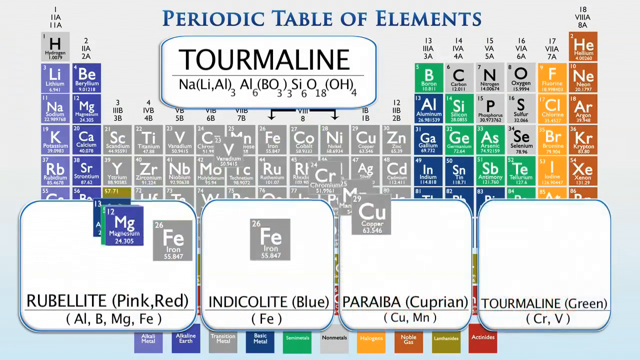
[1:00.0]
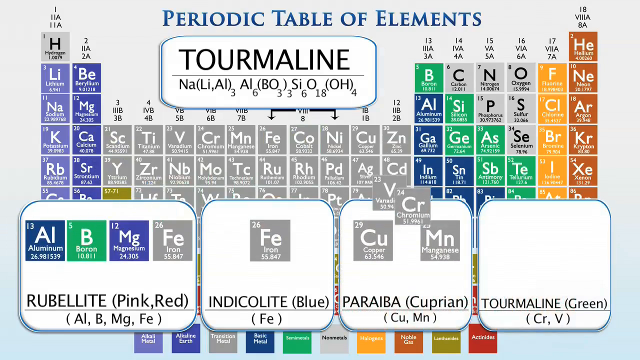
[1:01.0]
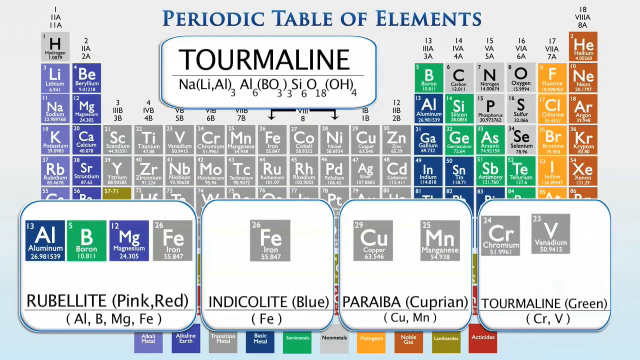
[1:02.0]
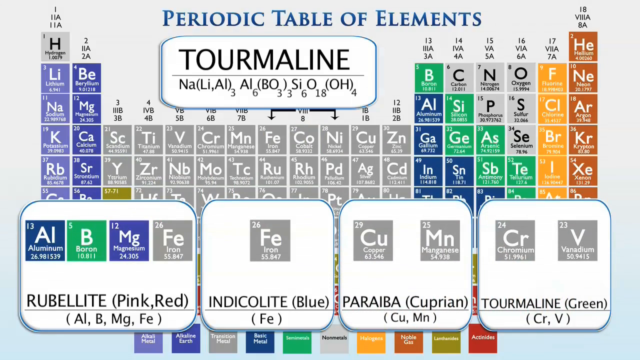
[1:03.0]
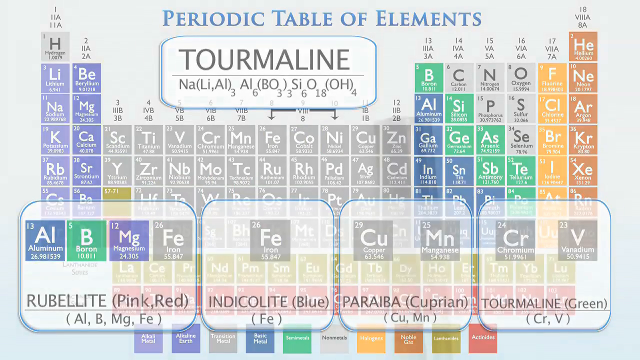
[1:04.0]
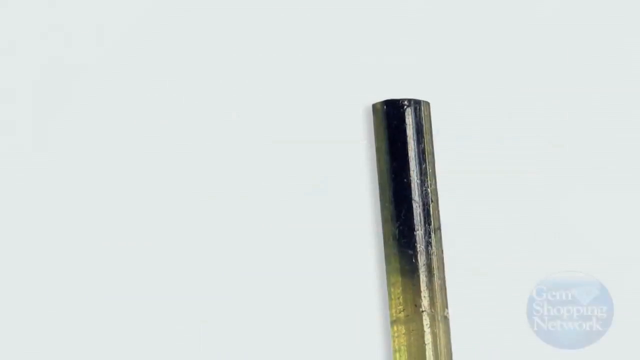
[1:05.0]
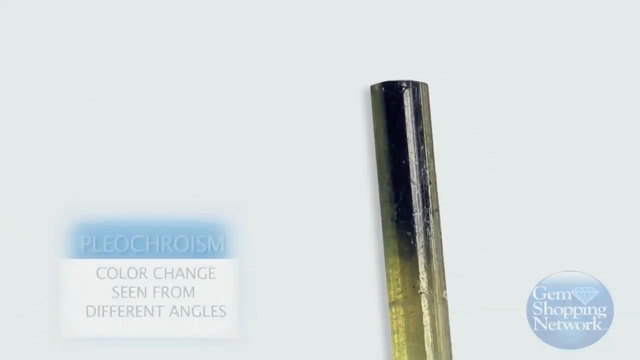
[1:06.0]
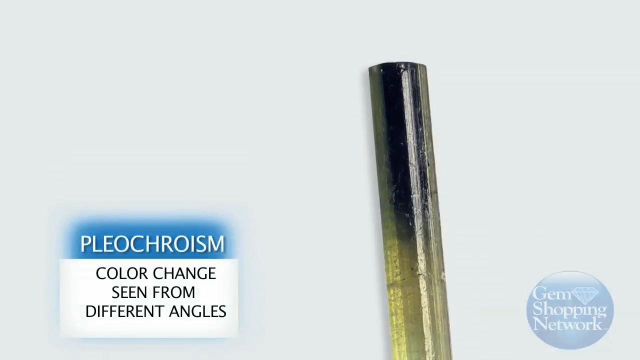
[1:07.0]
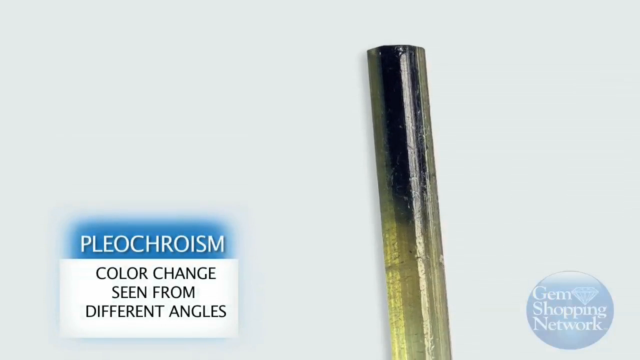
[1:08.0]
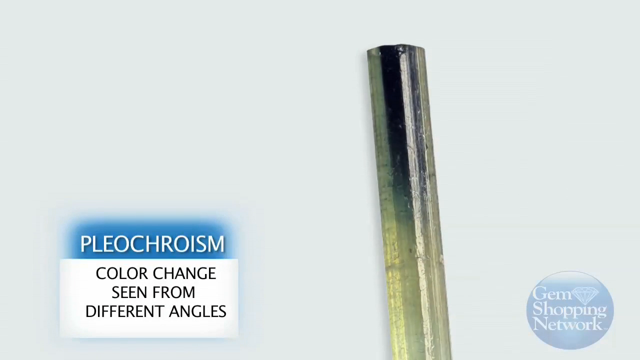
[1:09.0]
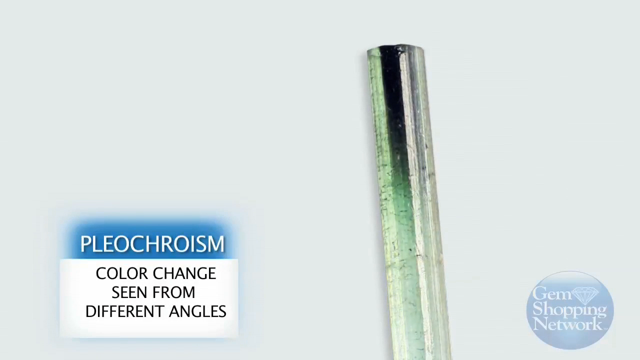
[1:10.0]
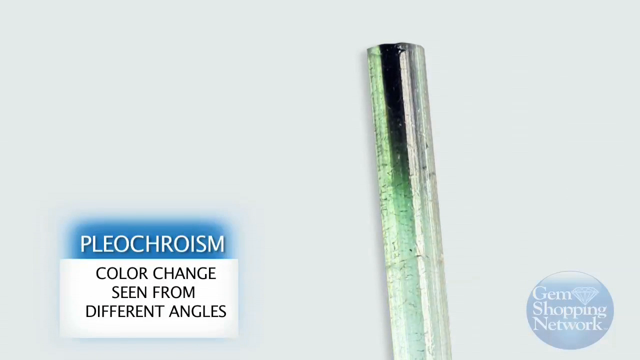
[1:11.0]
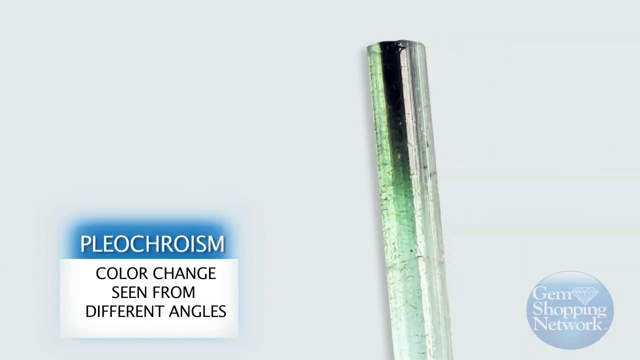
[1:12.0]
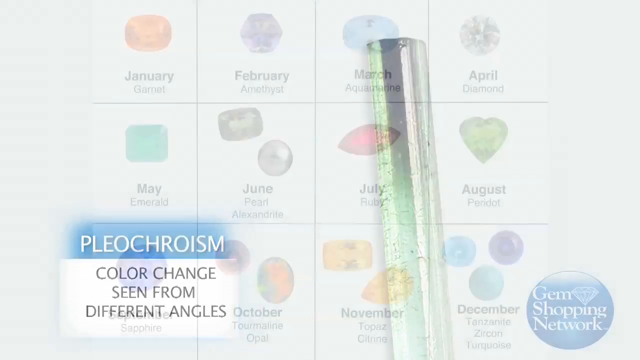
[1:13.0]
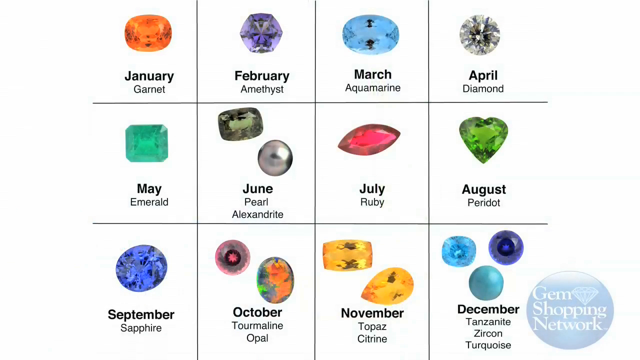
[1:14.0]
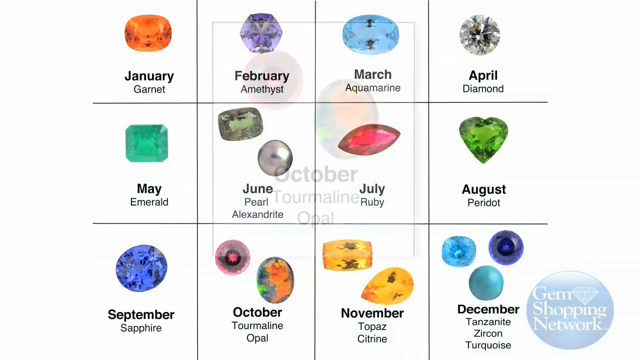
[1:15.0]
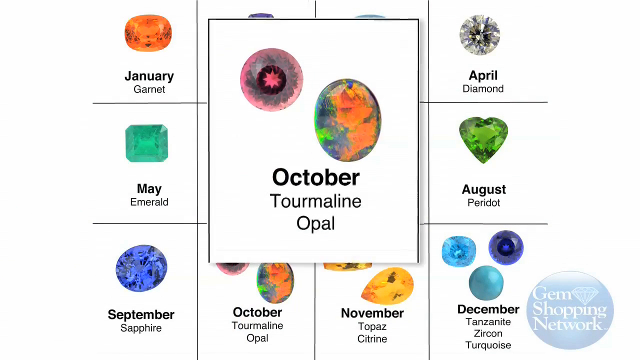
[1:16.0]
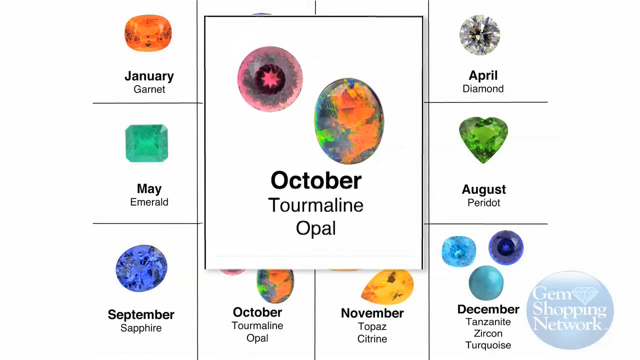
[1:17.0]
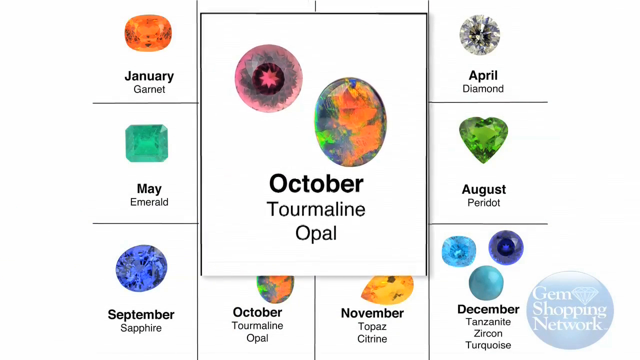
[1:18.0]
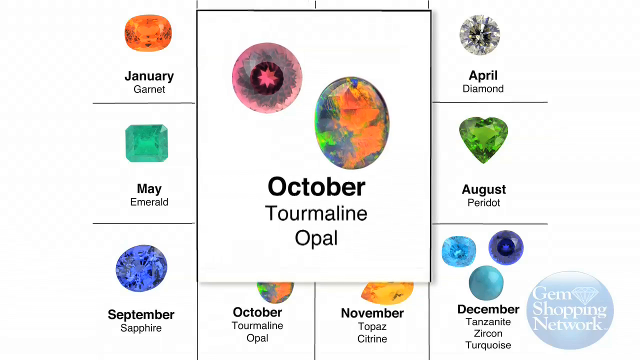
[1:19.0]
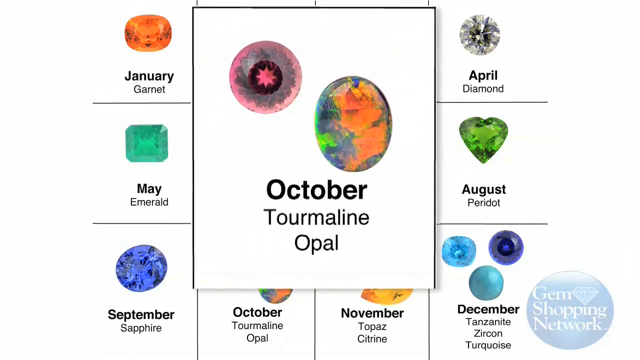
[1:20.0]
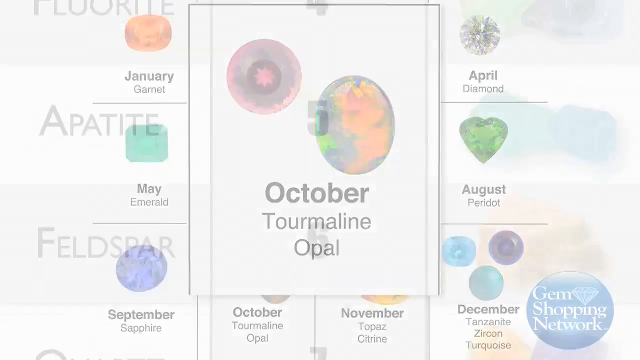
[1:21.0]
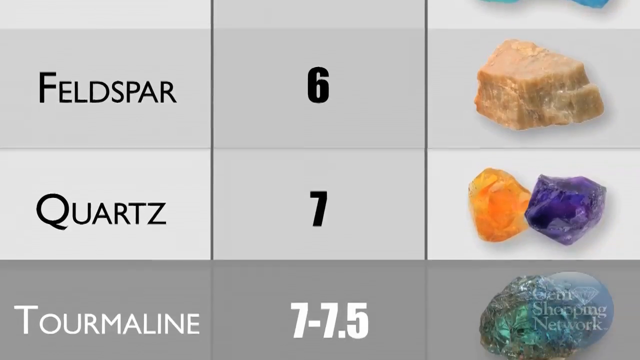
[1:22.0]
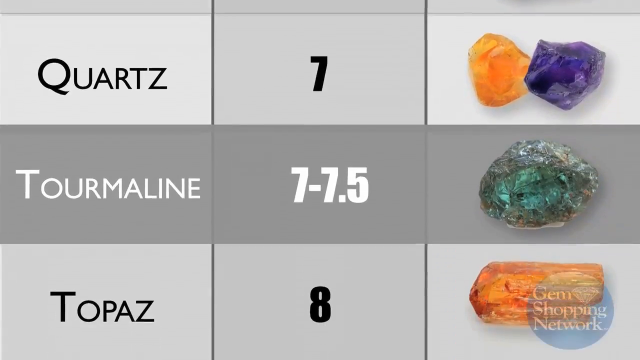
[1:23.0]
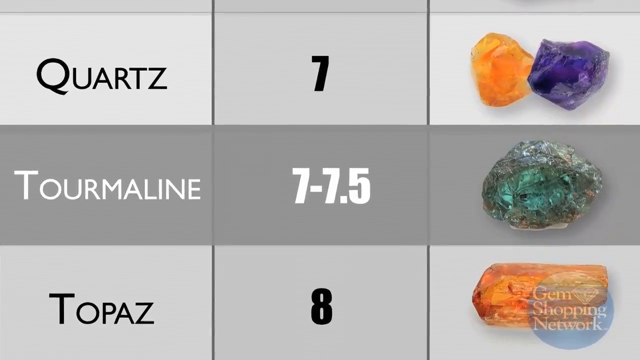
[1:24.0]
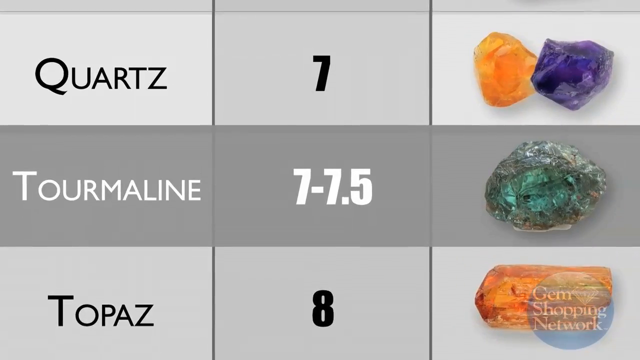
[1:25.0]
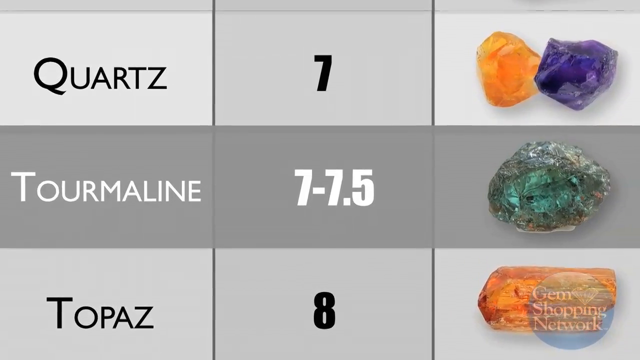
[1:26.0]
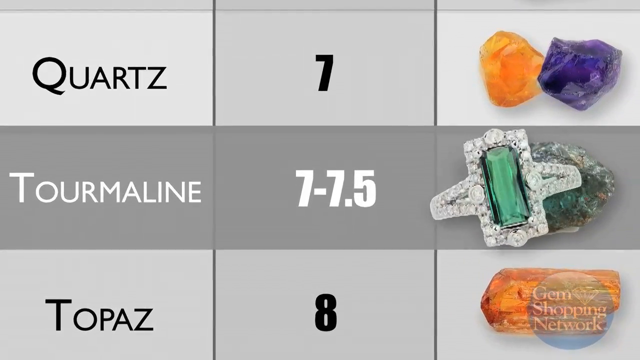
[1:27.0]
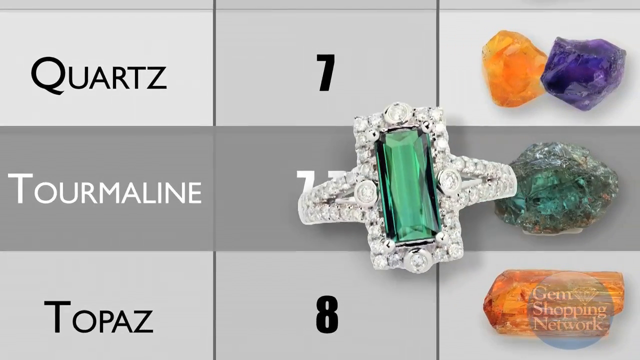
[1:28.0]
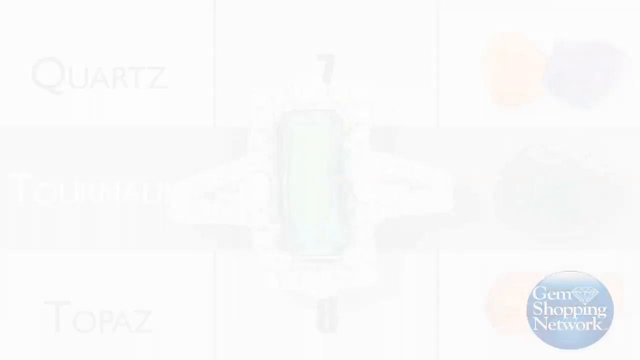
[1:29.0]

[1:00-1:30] On the periodic table of the elements, the chemical makeup of tourmaline is shown along with what seem to be its subcategories: rubelite, which is pink and red; endocolite, which is blue; pareba, which is cuprean; and tourmaline, which is green. The view fades to a different page with a cylindrical green and dark green stone and pleochroism, described as a color change seen from different angles. It then changes to a chart of birthstones: January is garnet, February is amethyst, March is aquamarine, April is diamond, May is emerald, June is pearl and alexandrite, July is ruby, August is peridot, September is sapphire, October is tourmaline and opal, November is topaz, and December is turquoise, tanzanite and zircon. Tourmaline is then shown as seven to seven and a half, without saying of what.